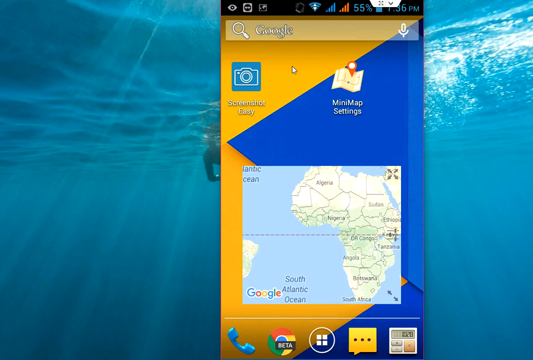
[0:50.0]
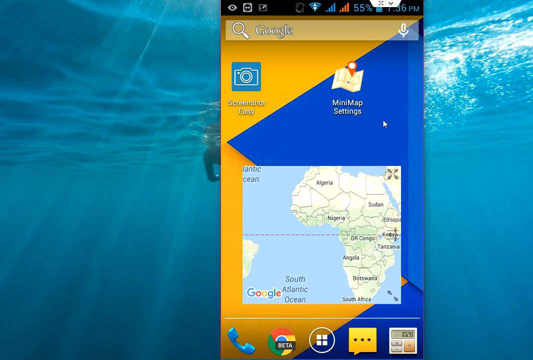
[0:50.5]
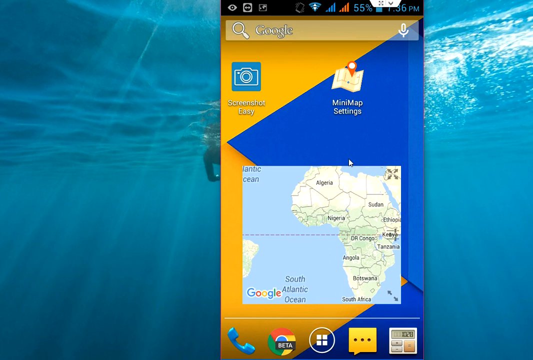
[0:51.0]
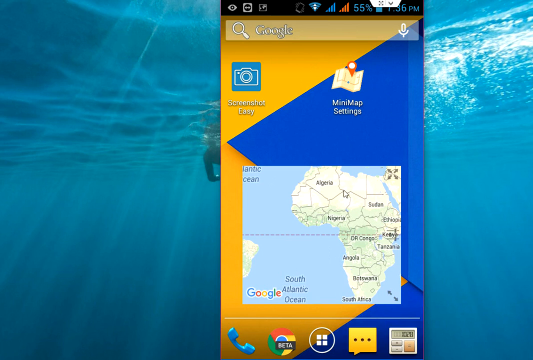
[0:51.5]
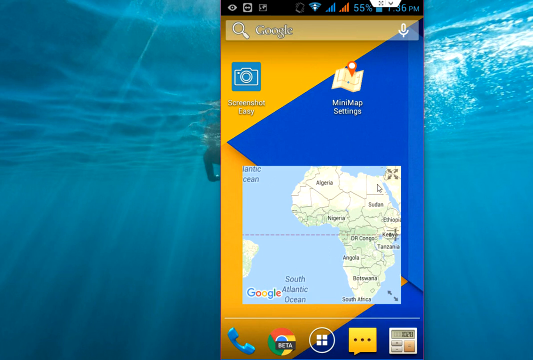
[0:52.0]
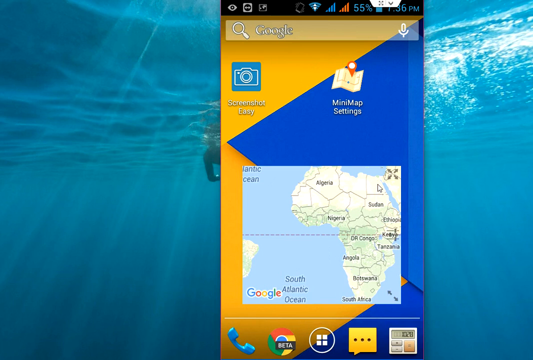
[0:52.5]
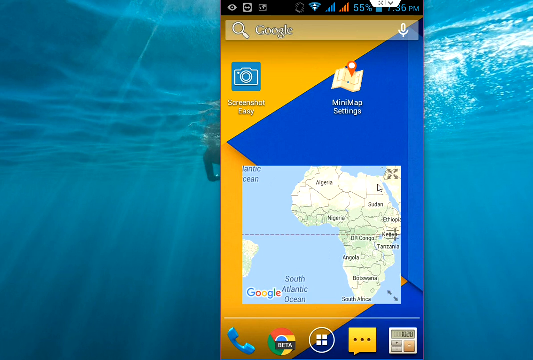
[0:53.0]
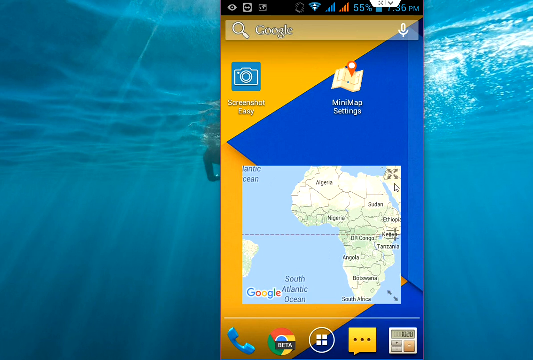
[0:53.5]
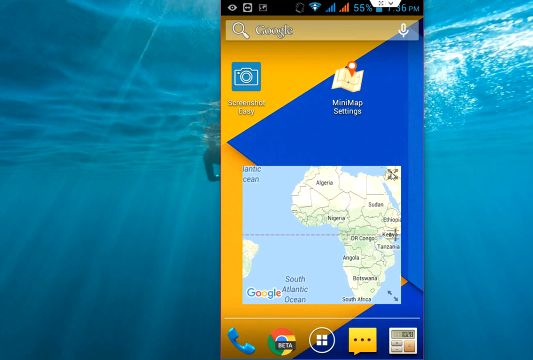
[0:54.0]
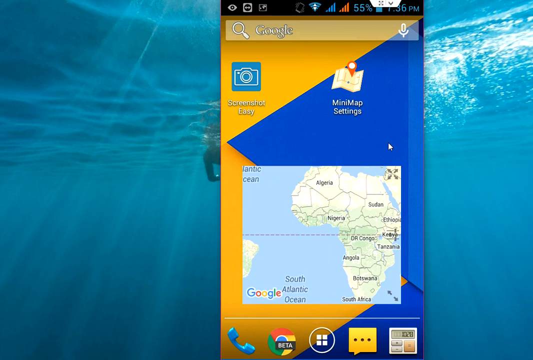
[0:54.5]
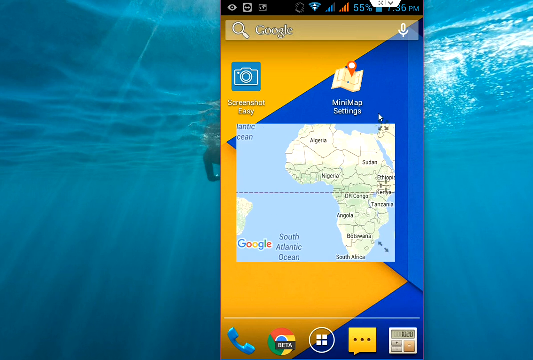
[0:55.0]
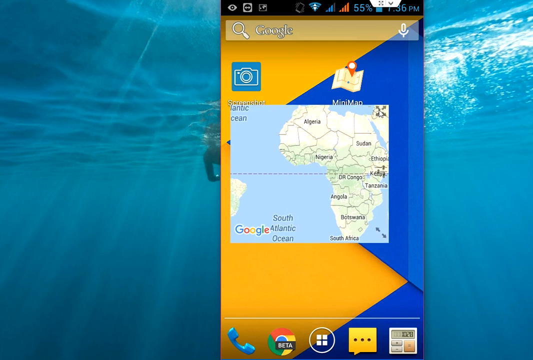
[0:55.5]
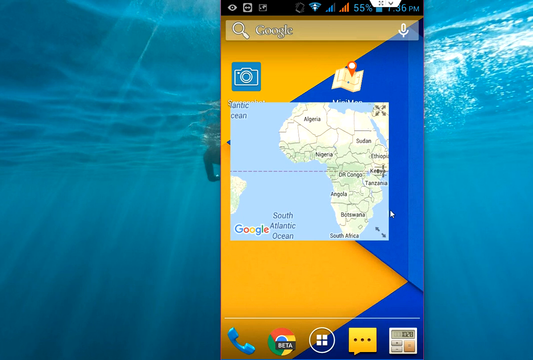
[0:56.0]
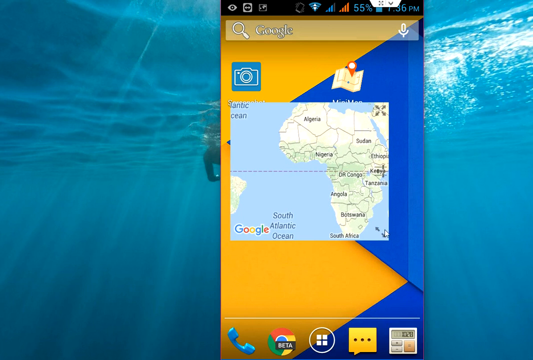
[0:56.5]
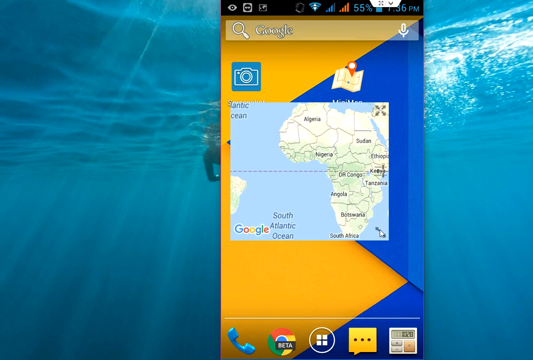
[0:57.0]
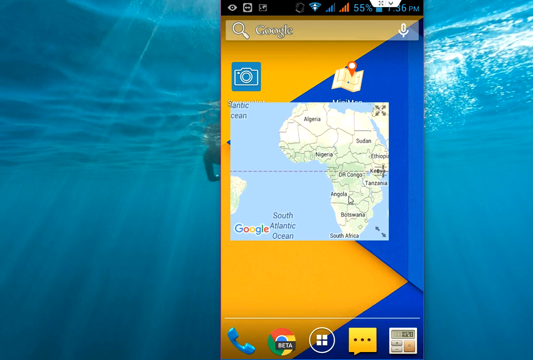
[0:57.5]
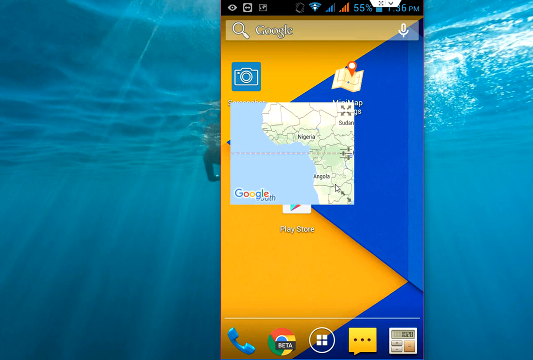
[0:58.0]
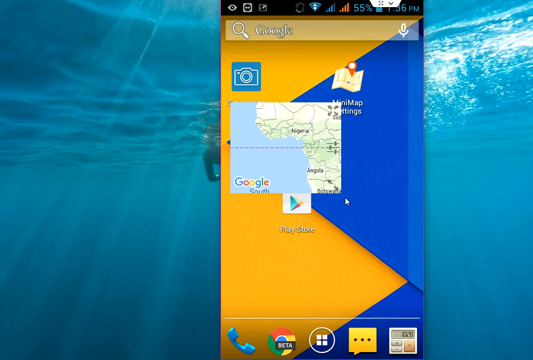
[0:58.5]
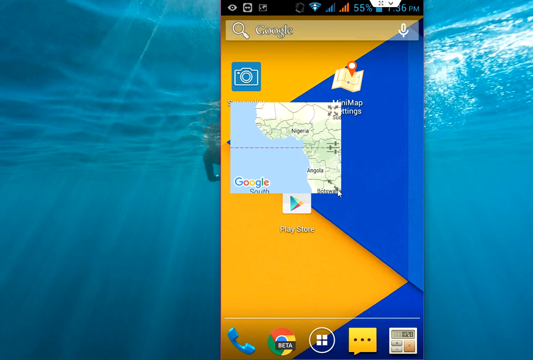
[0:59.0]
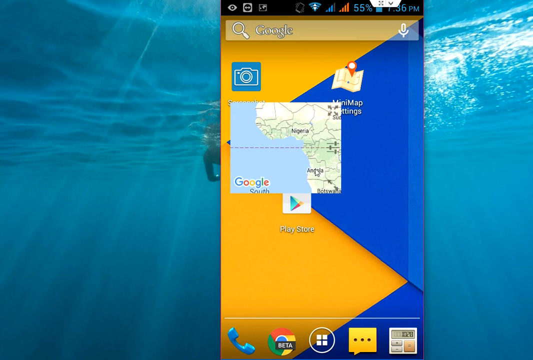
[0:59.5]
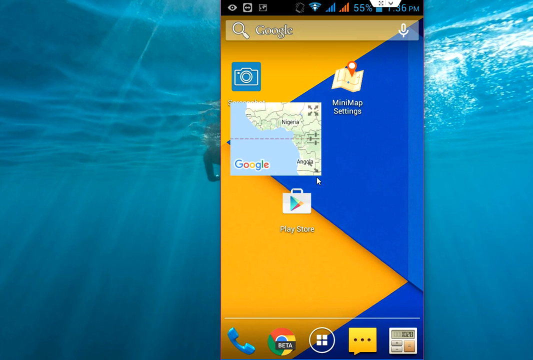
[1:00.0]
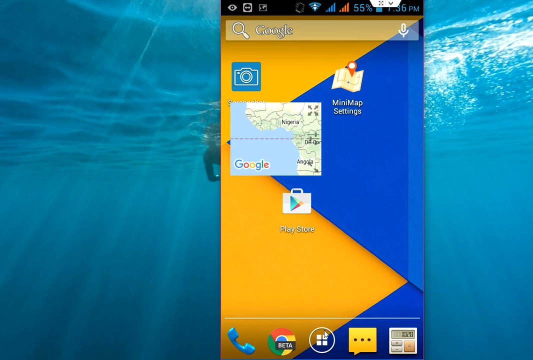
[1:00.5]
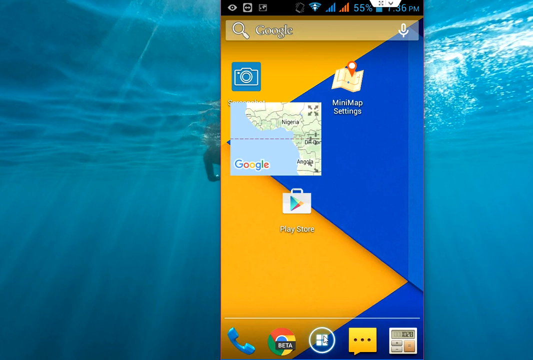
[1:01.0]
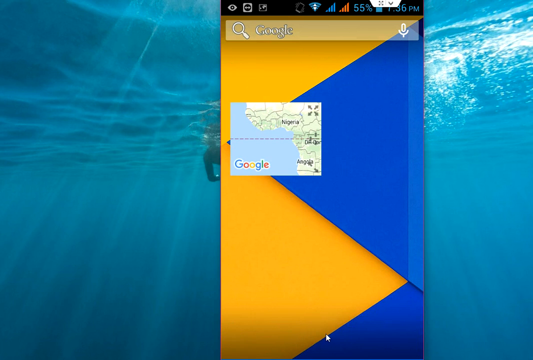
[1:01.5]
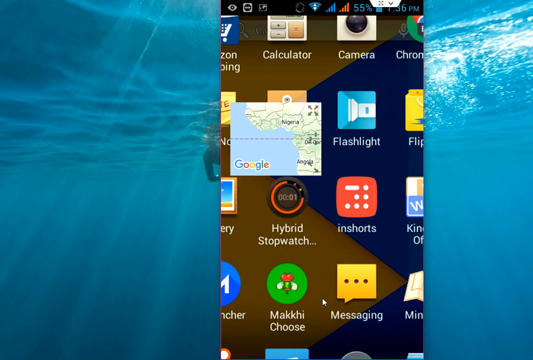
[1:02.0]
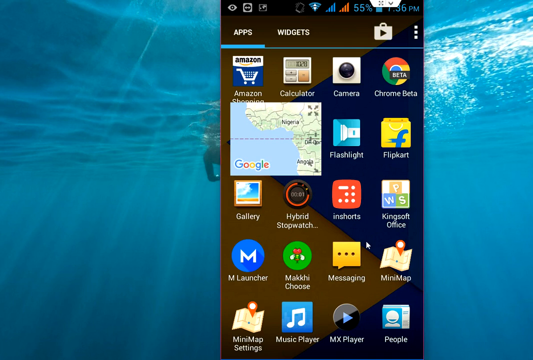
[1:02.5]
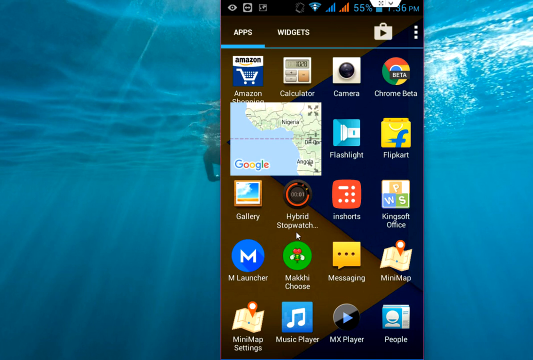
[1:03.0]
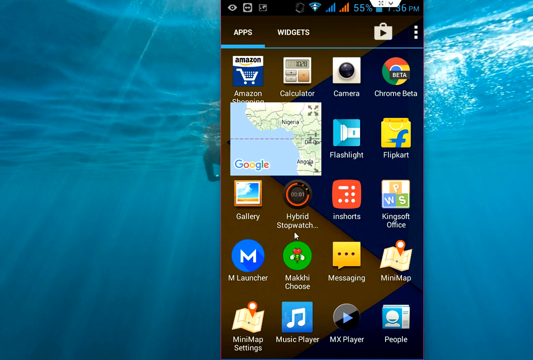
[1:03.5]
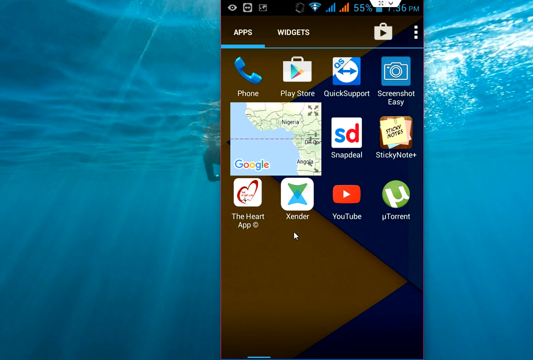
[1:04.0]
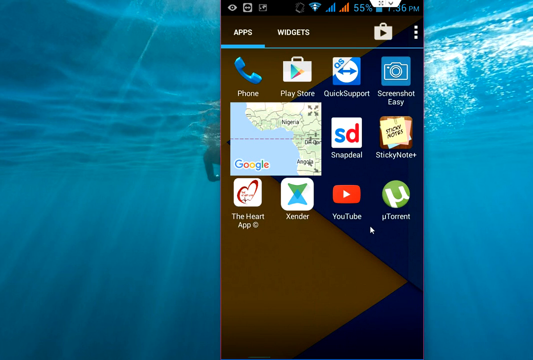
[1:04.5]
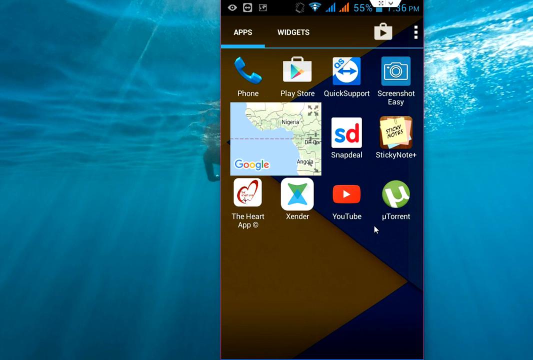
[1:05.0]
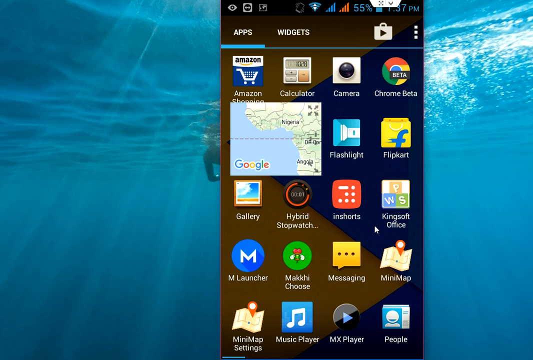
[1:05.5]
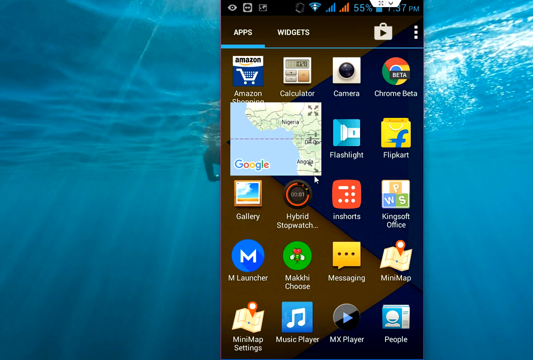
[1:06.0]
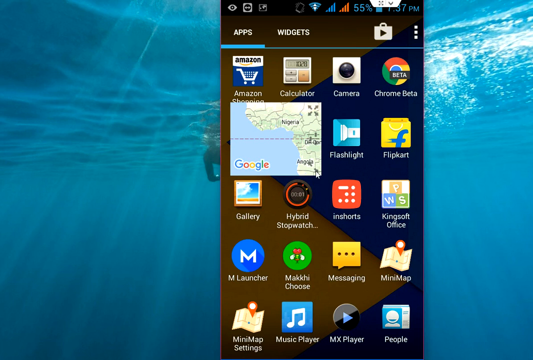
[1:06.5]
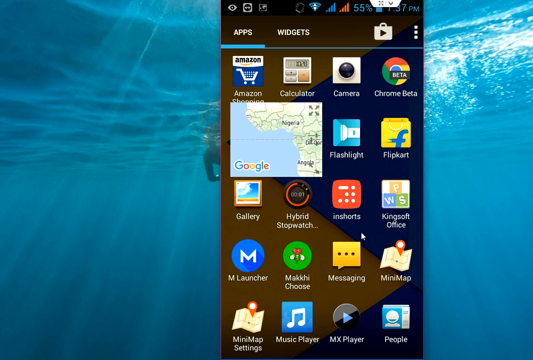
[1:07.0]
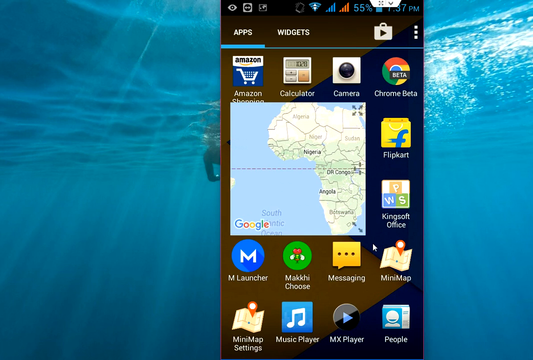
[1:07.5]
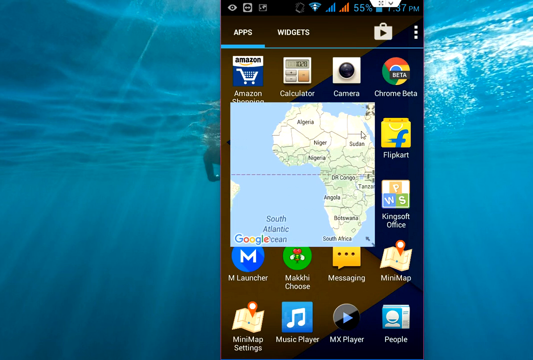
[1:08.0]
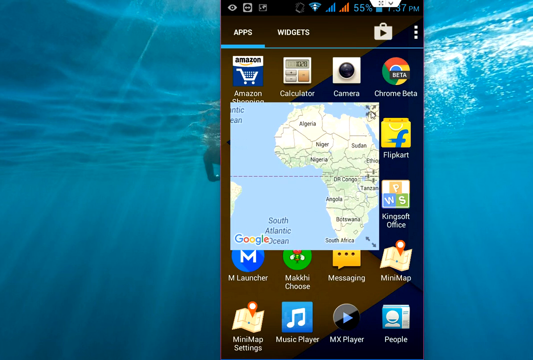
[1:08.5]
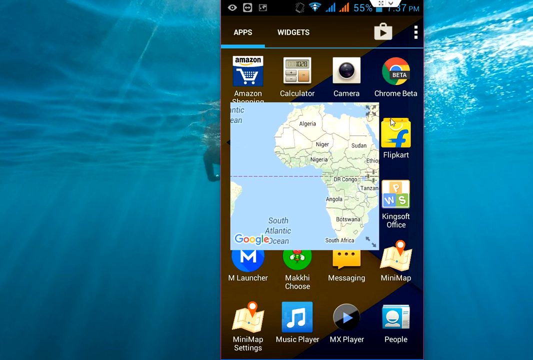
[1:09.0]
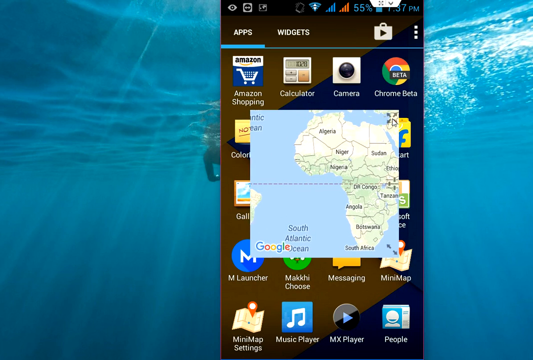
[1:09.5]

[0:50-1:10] The body of water remains in the background along with the swimmer, whose right arm and face with a scuba mask are visible. The phone shows the mini map app open and running. In the lower section of the phone screen is a map of Africa, which is a Google map, showing the South Atlantic Ocean and the continent of Africa. Algeria and Sudan are easily legible, as are South Africa, Tanzania, Congo, Nigeria and Botswana. The mouse scrolls, moves and hovers over the map. It moves the map higher on the phone and resizes it smaller. It then shifts the phone so other apps on the phone are visible, with the smaller map laid above them. The phone screen is filled with apps such as Amazon, calculator, camera, chrome beta, flashlight, flip art, gallery, hybrid stopwatch, insorts, king soft office, M launcher, messaging, mini map and others that are not legible. The phone screen changes to a different page of apps, including phone, play store, quick support, screenshot, screenshot easy, snap deal, sticky note, the heart app, extender, YouTube and torrent. The finger and arrow then shift back to the original phone screen with Amazon and calculator at the top, and then make the map of Africa bigger and move it.